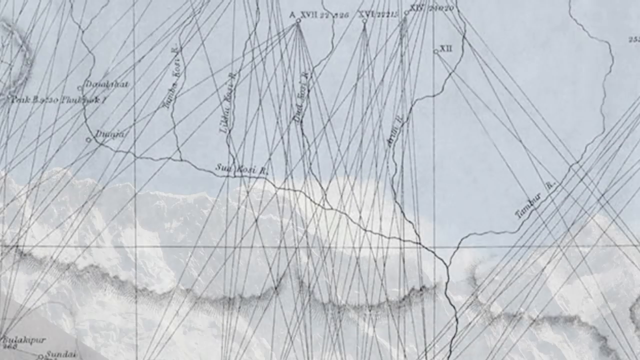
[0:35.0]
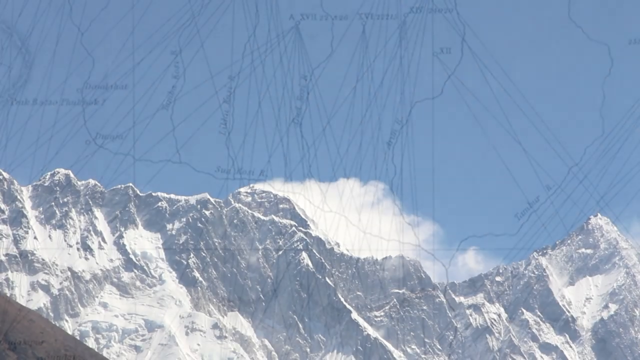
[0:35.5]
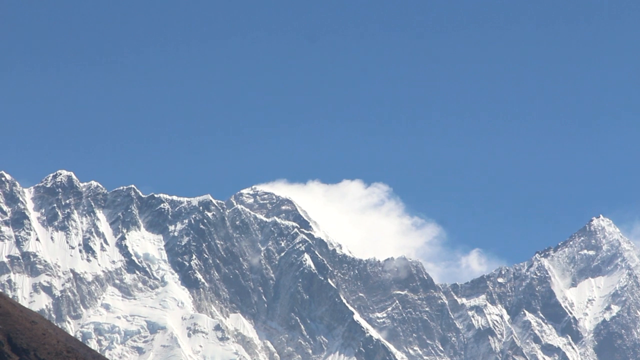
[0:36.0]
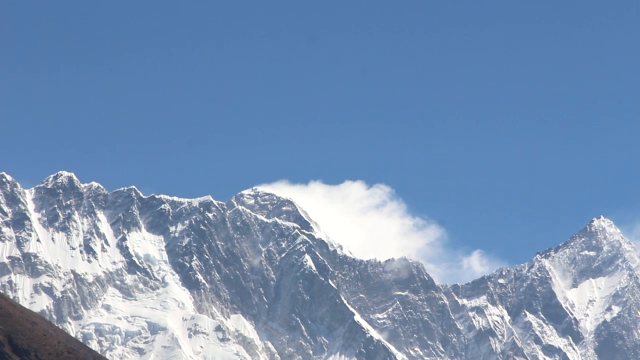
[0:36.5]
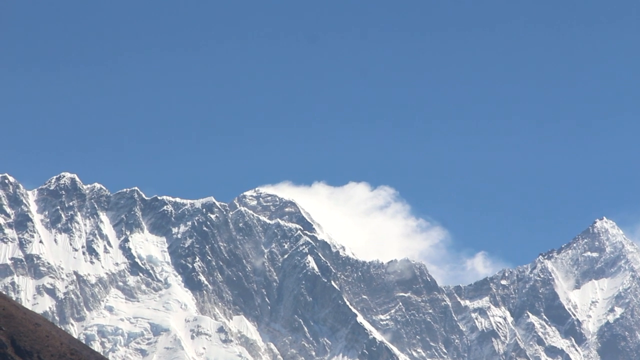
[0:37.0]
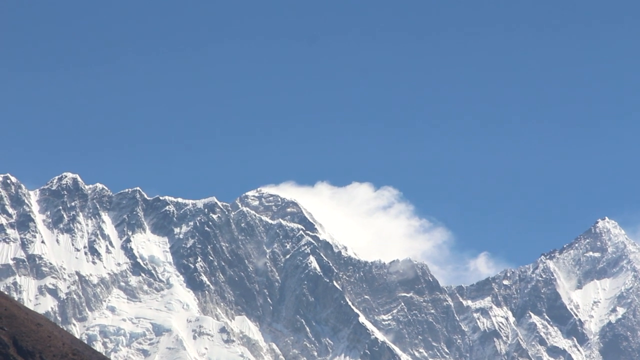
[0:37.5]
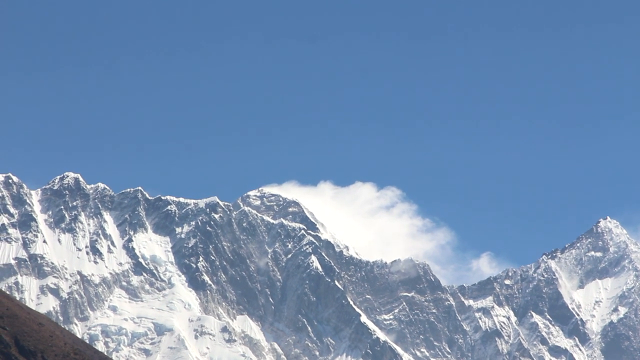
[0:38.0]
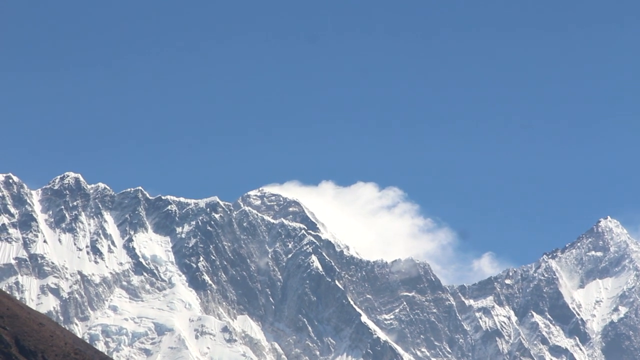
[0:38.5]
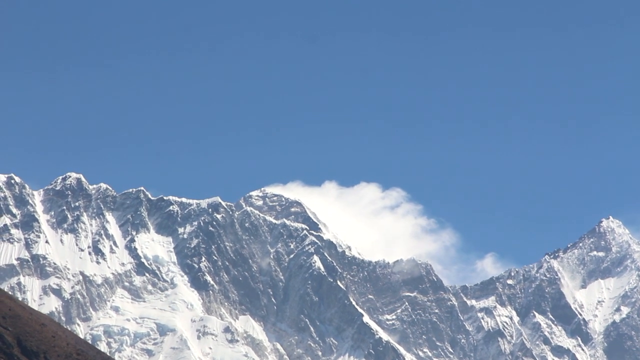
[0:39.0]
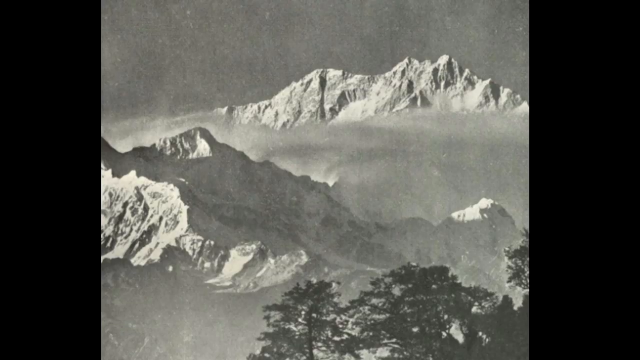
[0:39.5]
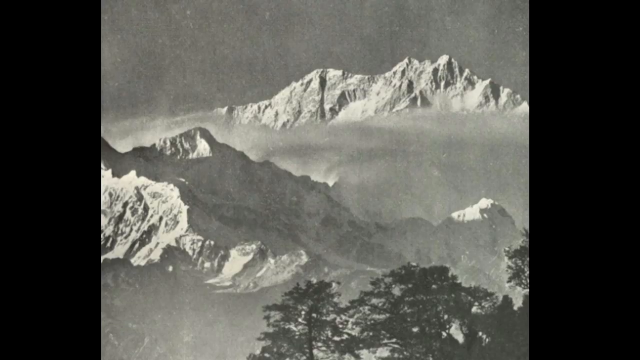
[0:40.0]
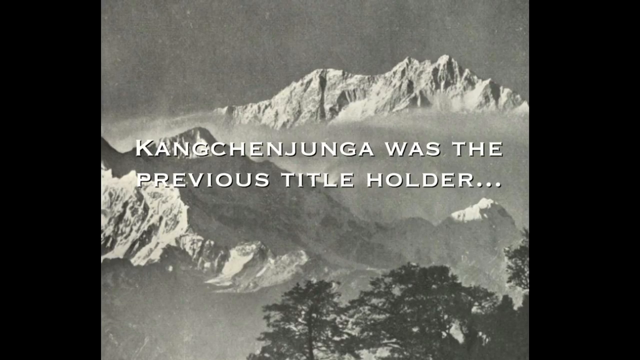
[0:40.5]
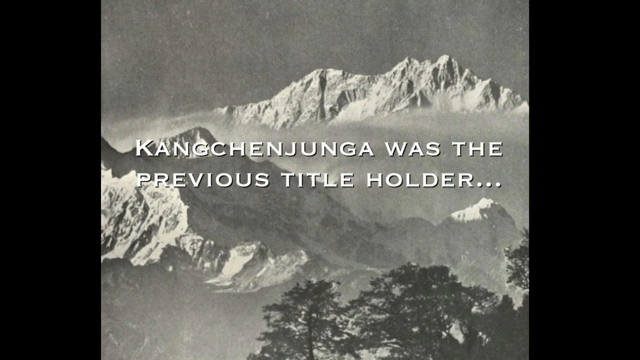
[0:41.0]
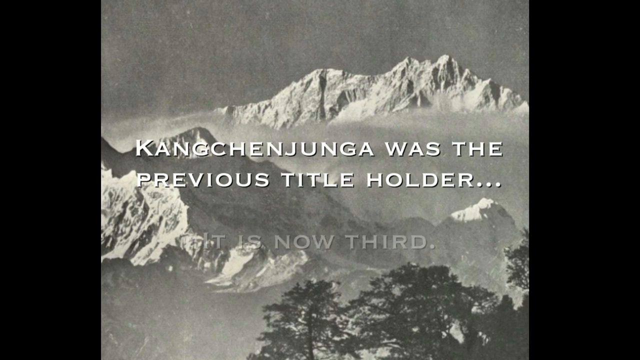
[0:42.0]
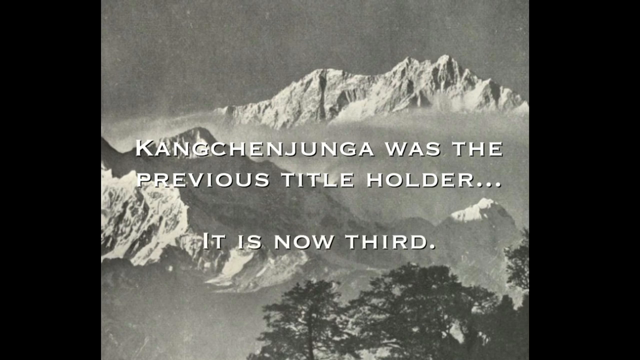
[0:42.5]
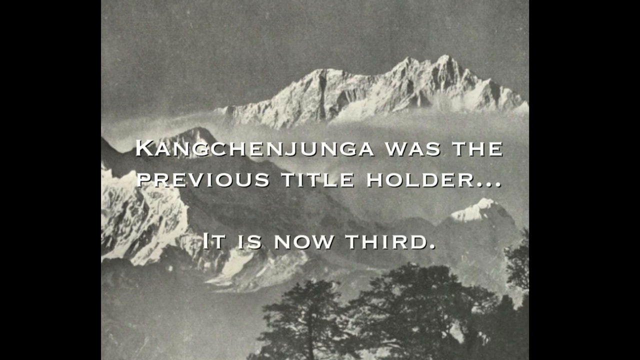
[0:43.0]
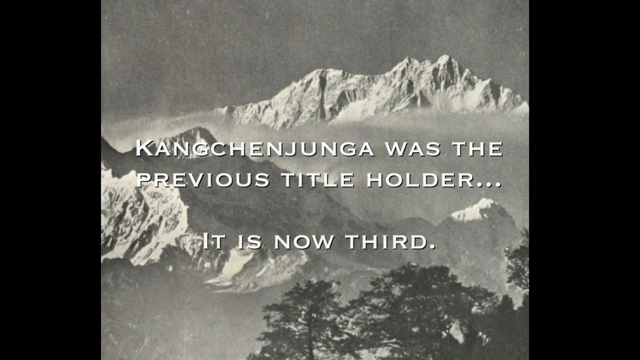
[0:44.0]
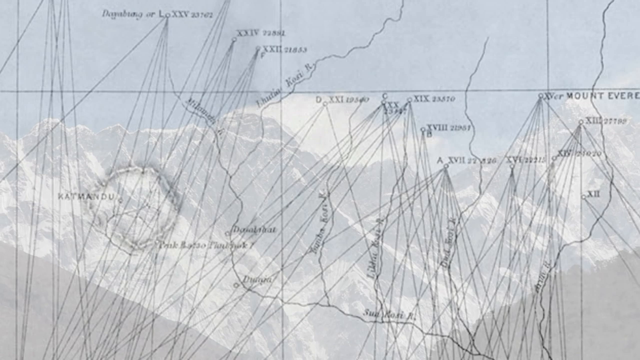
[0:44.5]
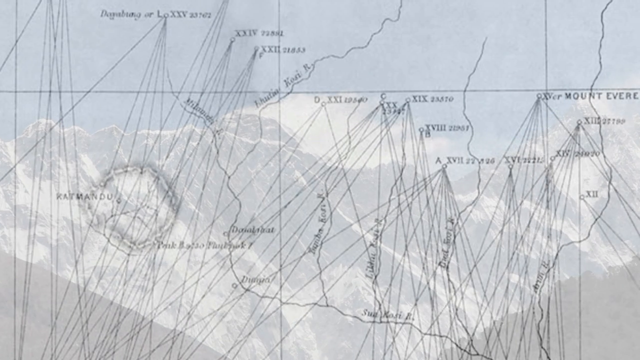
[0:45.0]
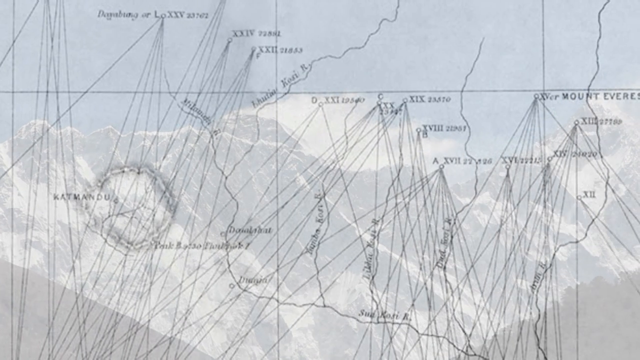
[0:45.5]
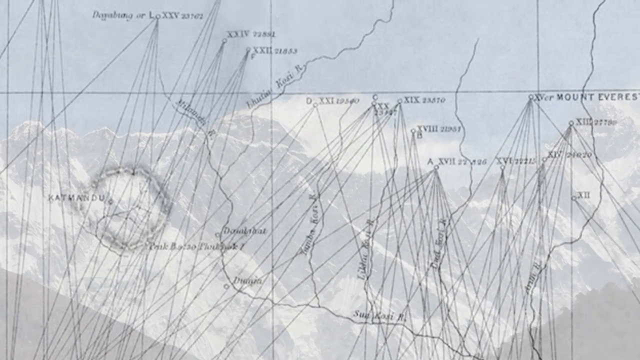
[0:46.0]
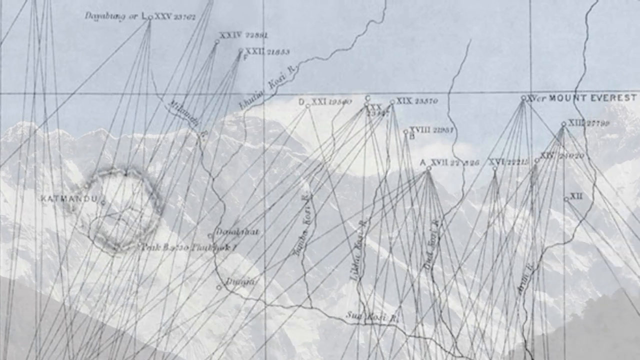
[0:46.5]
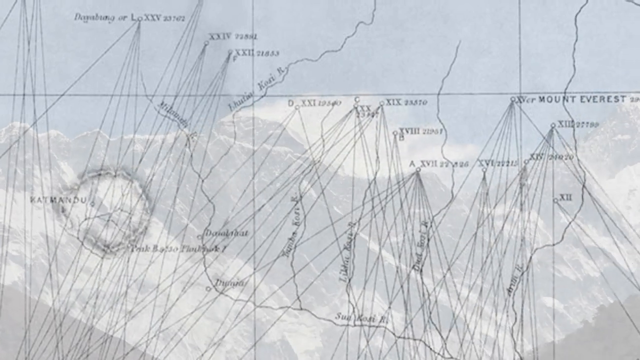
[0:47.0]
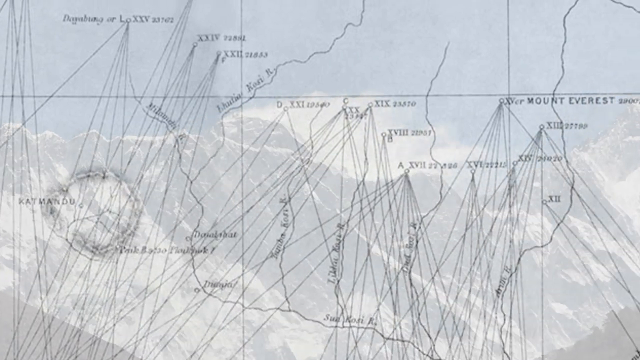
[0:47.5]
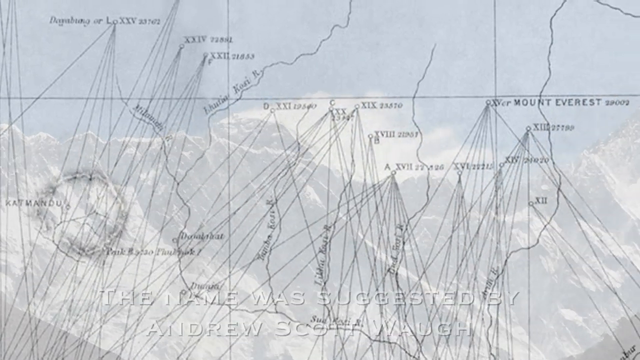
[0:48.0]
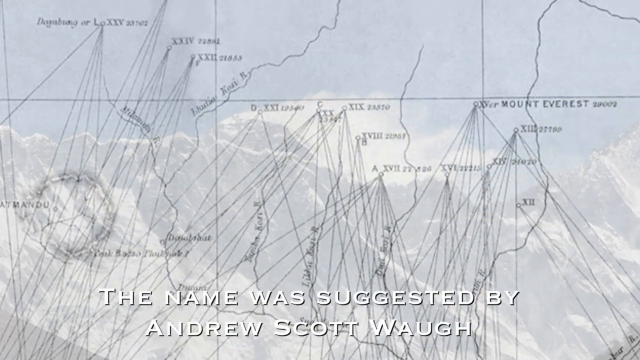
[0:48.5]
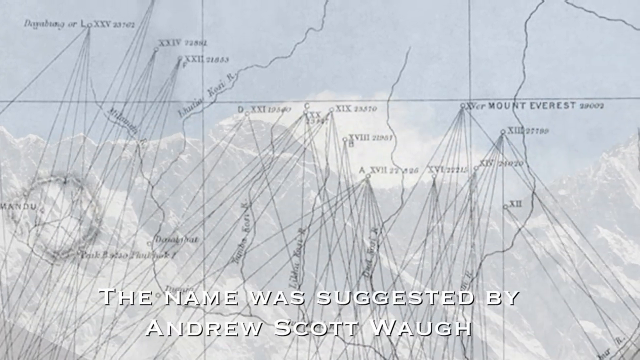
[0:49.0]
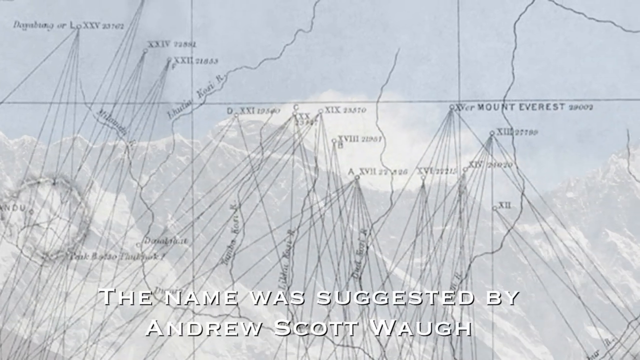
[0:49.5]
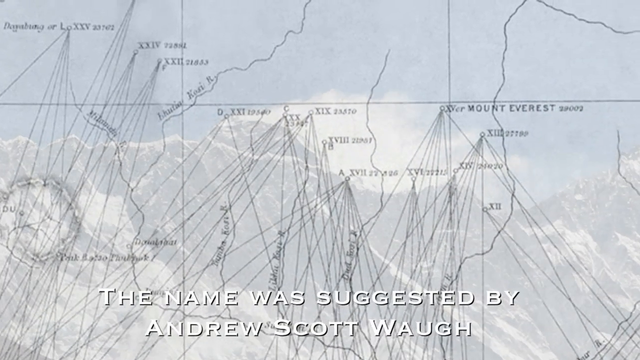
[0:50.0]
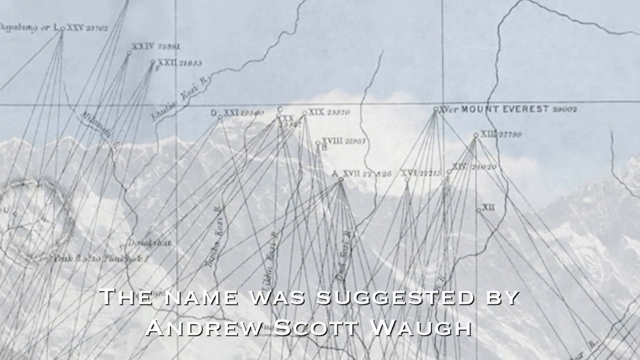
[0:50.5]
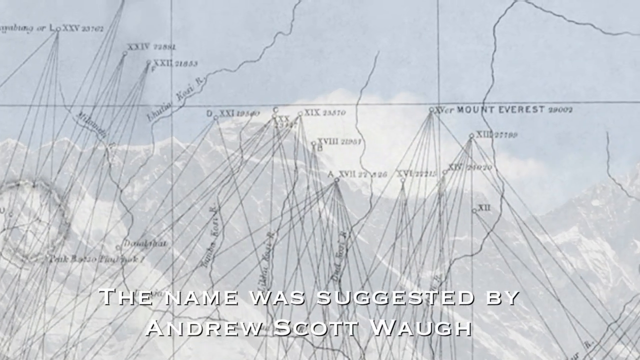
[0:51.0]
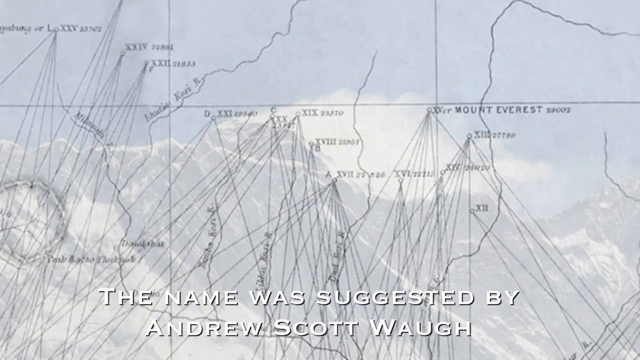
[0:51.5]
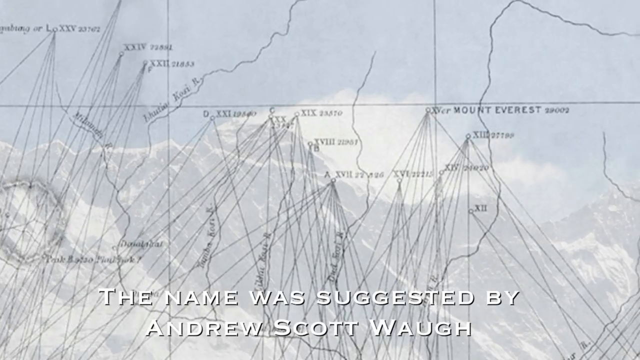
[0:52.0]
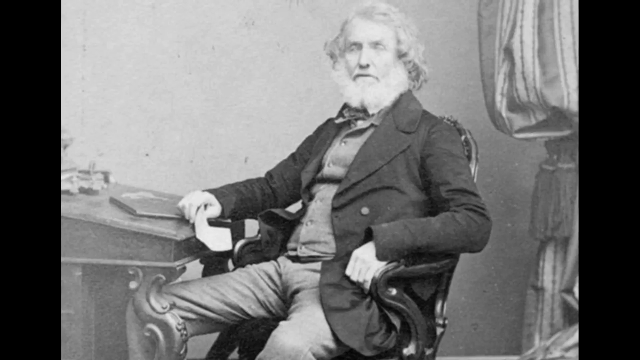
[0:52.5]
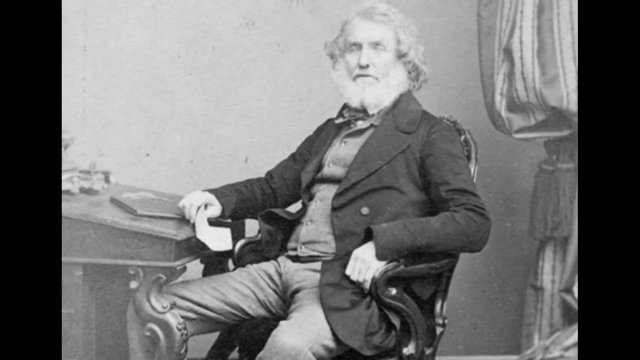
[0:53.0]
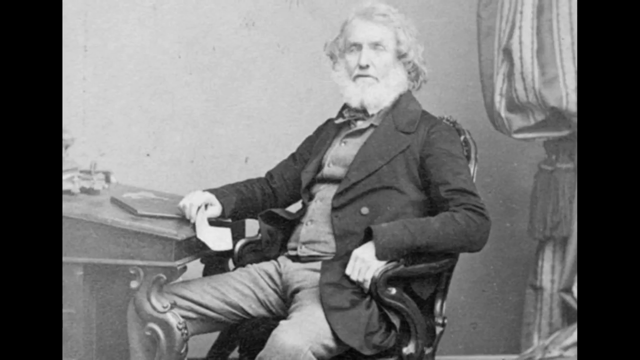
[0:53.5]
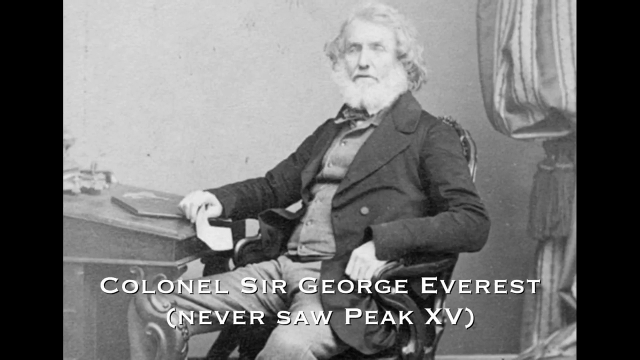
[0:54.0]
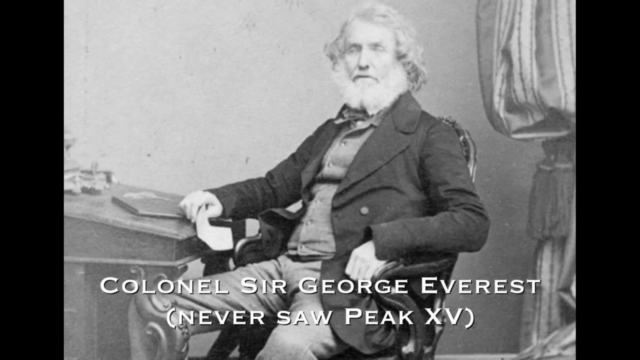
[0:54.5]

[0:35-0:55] A map carries the text "The name was suggested by Andrew Scott Waugh" in white capital letters at the bottom. An old black and white photo of the man in the chair is labeled "Colonel Sir George Everest," with "never saw peak XIV" in front of the picture. The video rotates between the map, the man and the mountains. The map is white with many black lines, many of them very straight, as though drawn with rulers. There are two mountain pictures: a colored one with a light blue sky and white peaks, and an old, faded, sepia-toned one labeled "Kangchenjunga." The map is sort of faded over the color photo of the mountains.